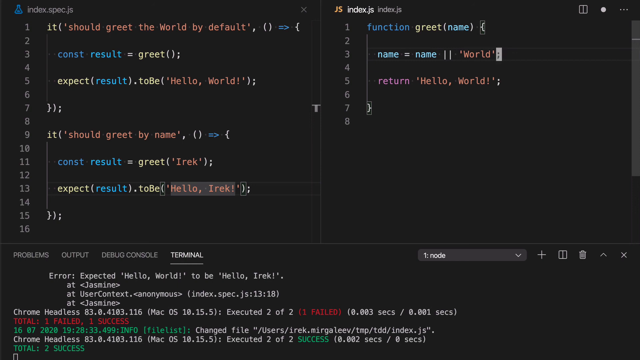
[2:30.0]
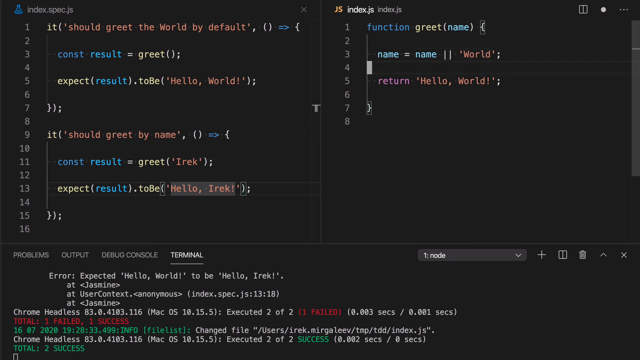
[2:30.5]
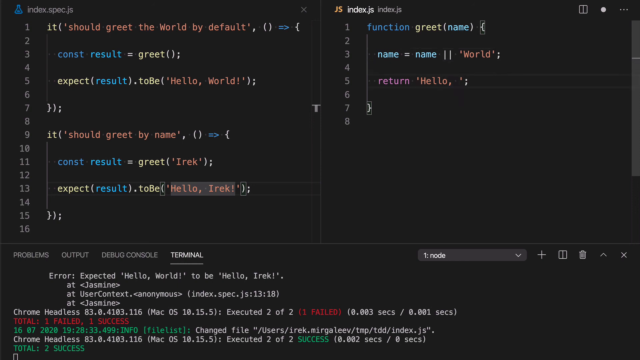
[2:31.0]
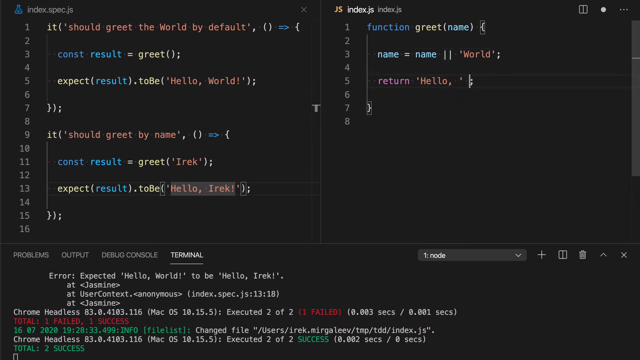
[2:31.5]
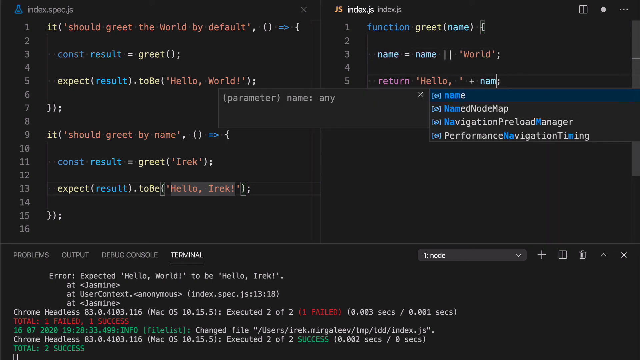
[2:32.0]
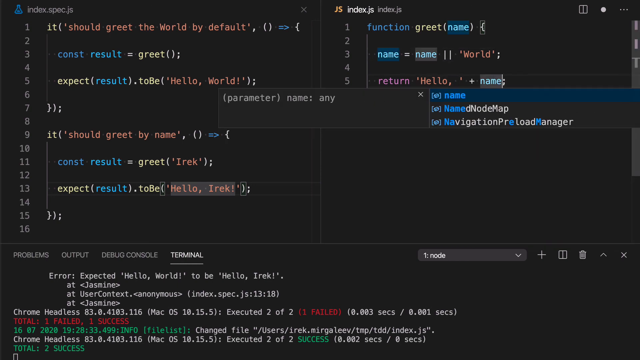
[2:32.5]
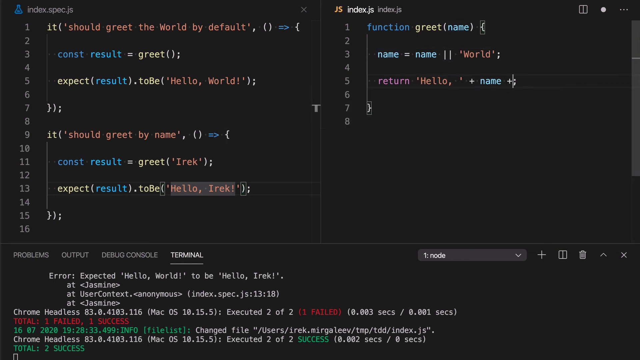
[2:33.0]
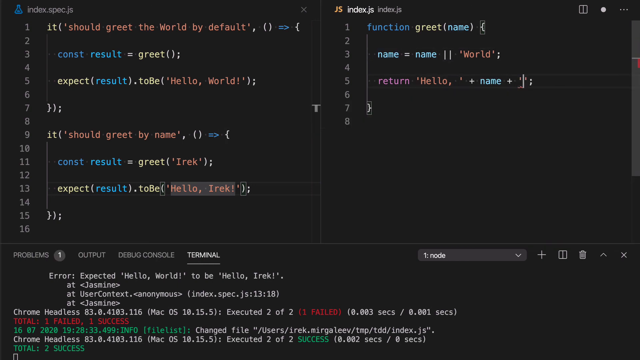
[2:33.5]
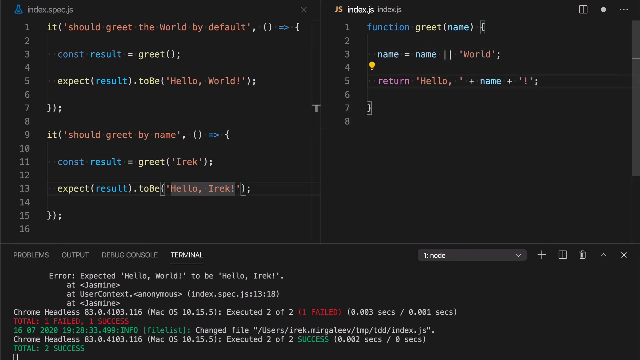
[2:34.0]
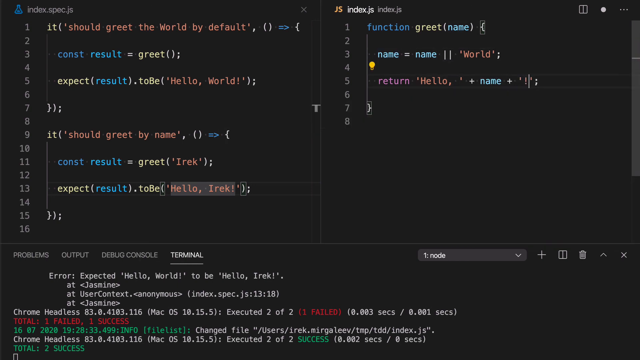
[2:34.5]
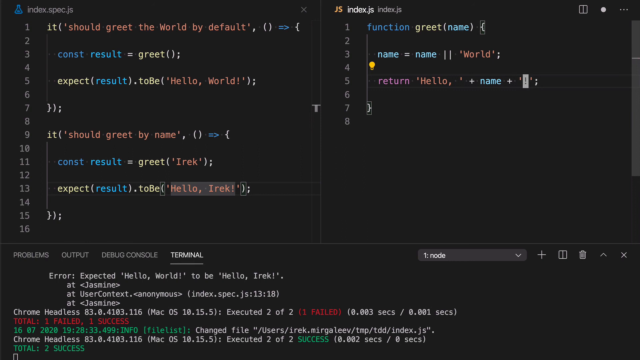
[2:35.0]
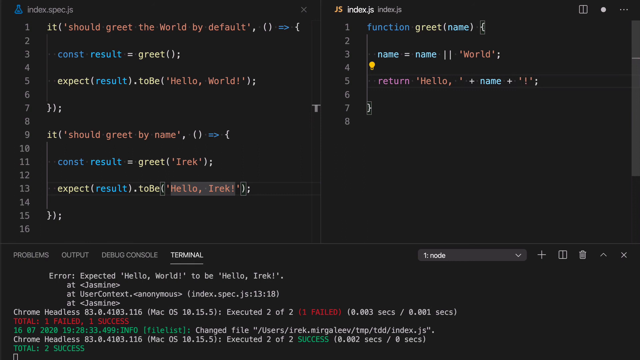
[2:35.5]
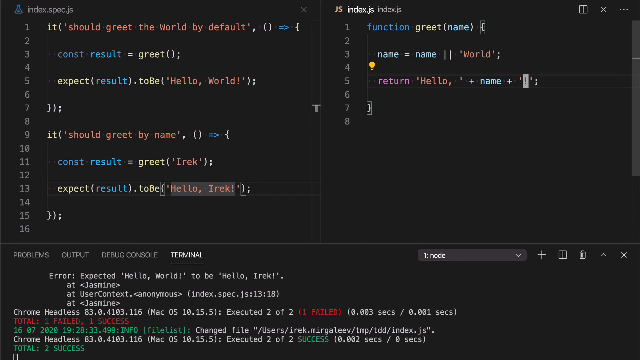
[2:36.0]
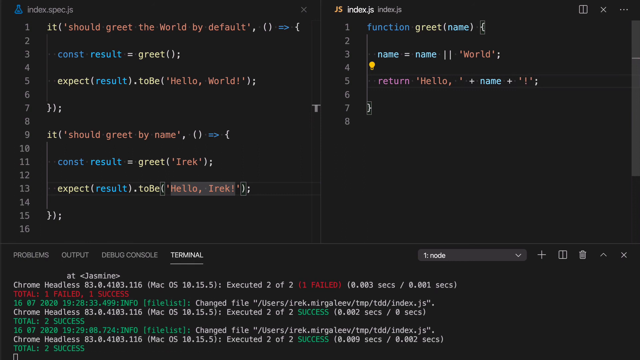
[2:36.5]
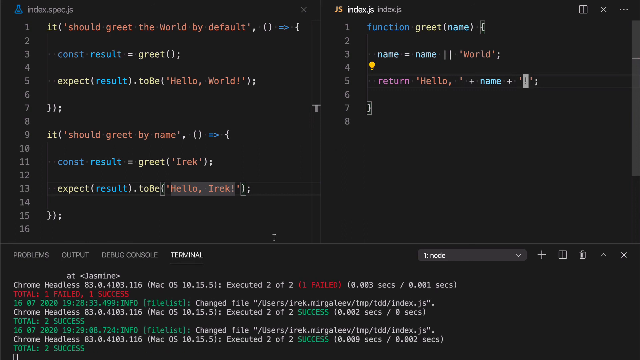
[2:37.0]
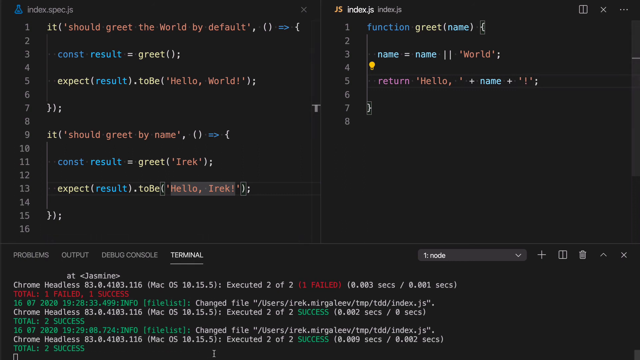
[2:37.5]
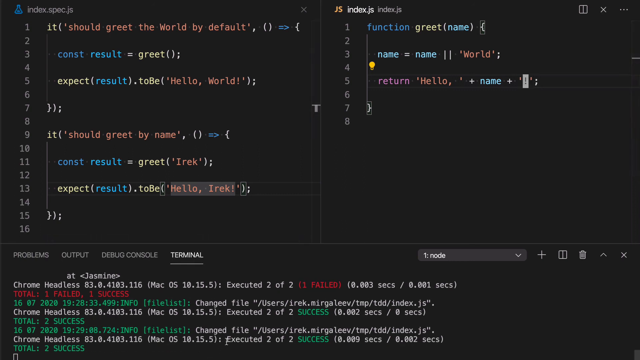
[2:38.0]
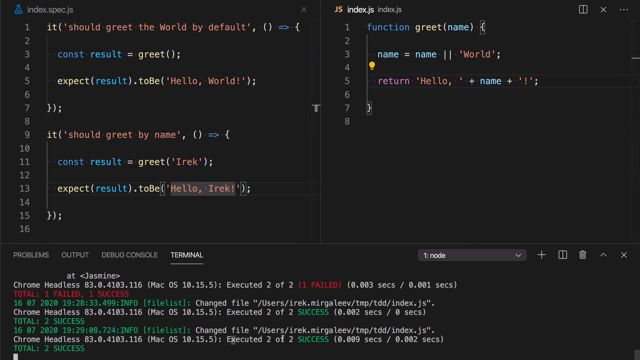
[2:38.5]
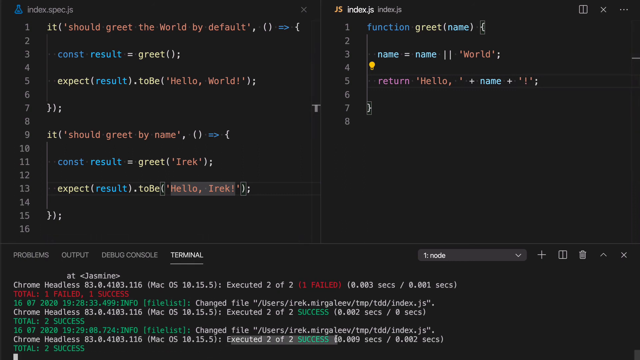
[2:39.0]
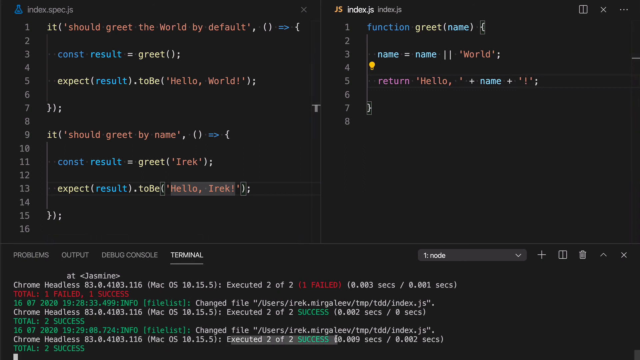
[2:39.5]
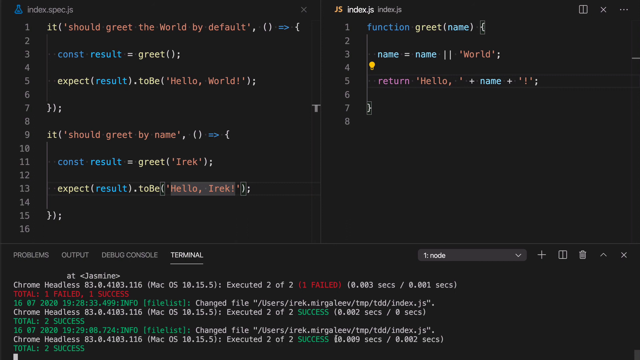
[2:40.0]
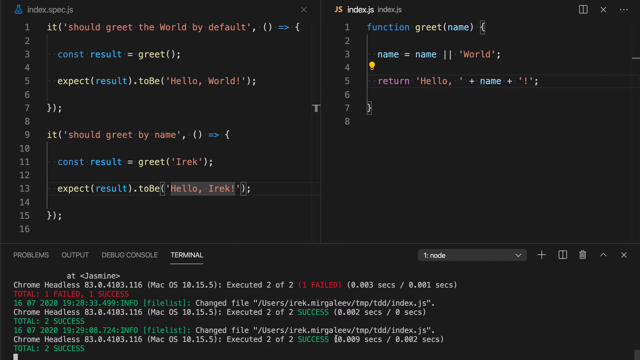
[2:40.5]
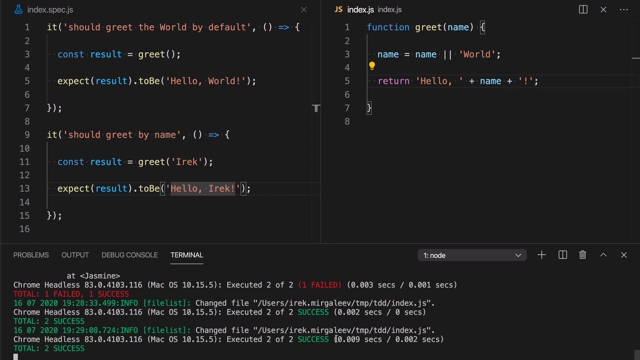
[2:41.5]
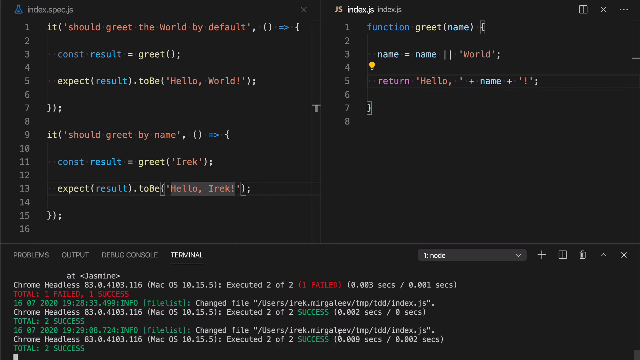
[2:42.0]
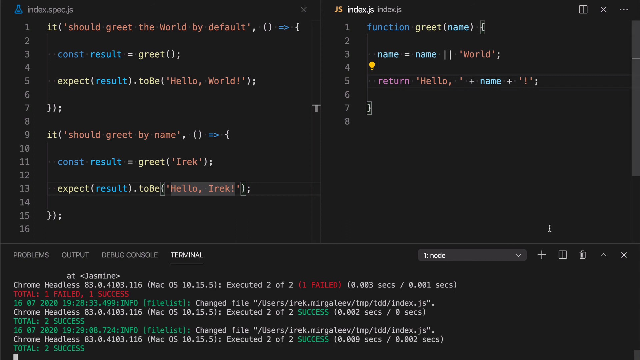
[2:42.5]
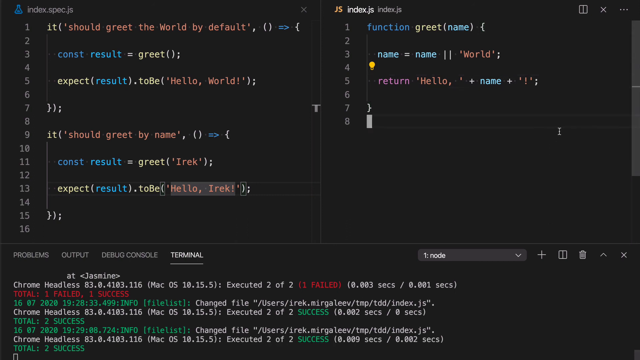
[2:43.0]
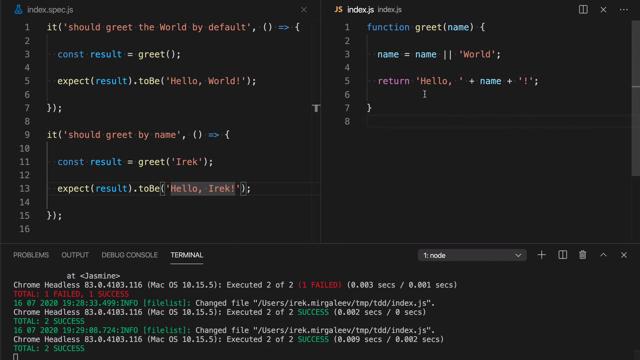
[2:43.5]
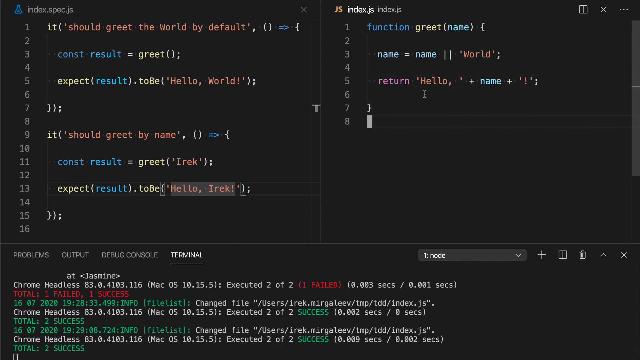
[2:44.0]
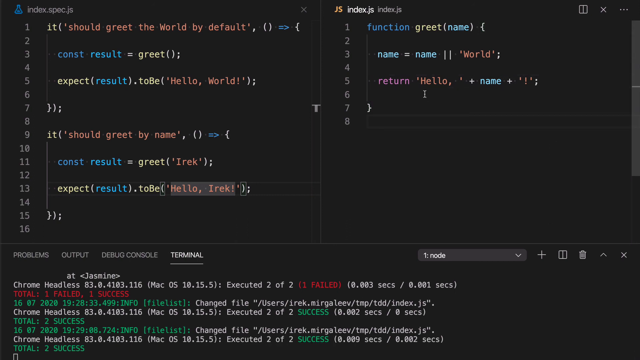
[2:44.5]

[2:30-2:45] The black screen shows writing and punctuation on numbered lines. Line 1 has "should greet the world by default", and line 13 says "expect result to be hello IREK". At the very bottom is "error expected hello world to be hello IREK jasmine" and "user context anonymous jasmine". Someone continues typing, and the words are in different colors.